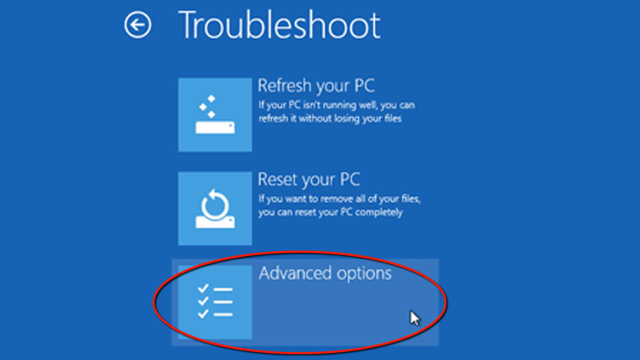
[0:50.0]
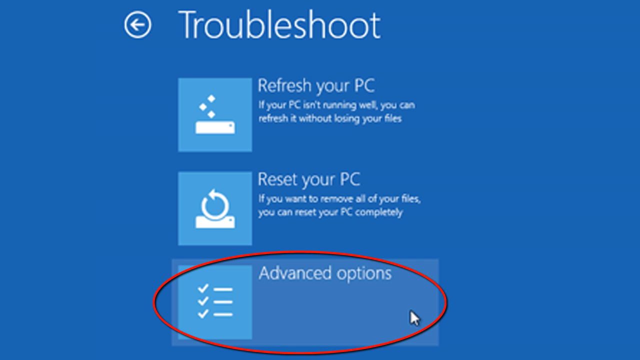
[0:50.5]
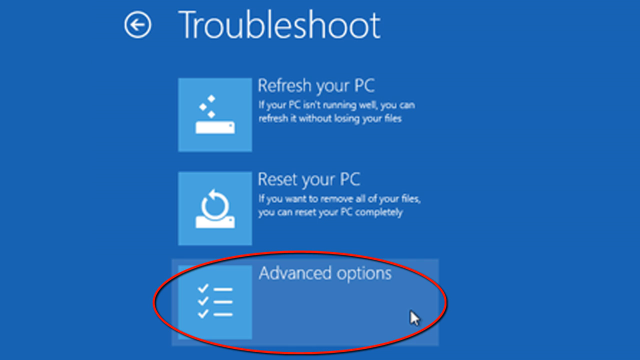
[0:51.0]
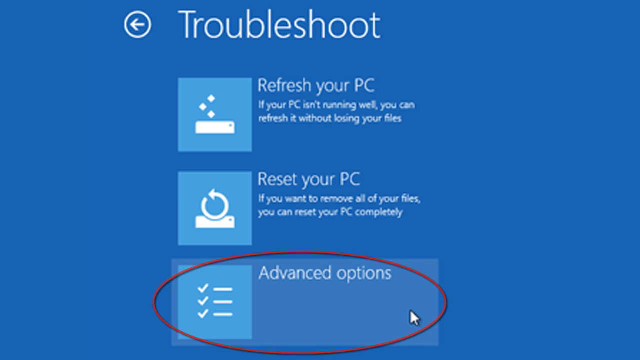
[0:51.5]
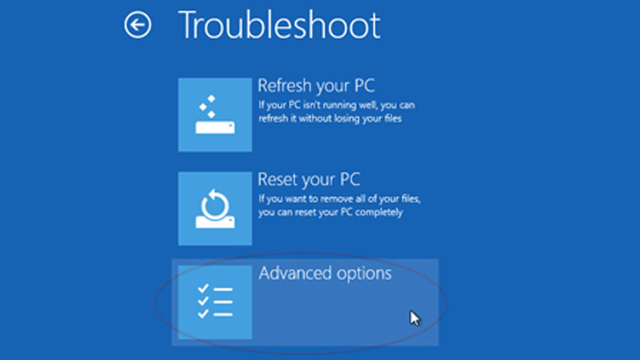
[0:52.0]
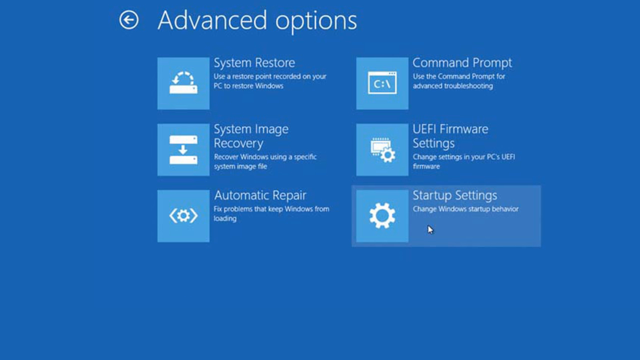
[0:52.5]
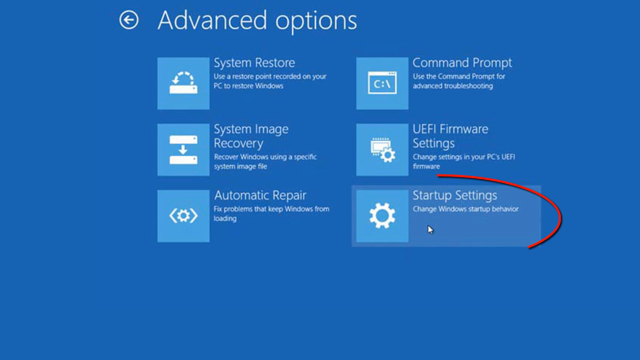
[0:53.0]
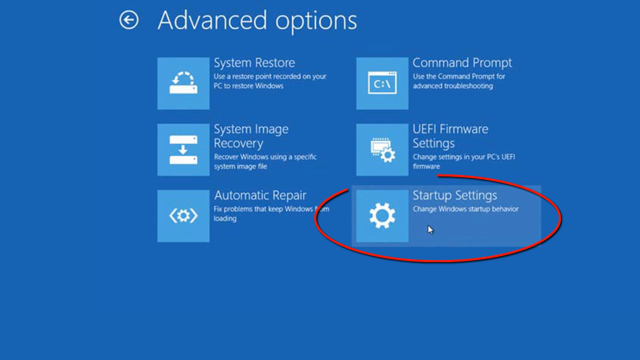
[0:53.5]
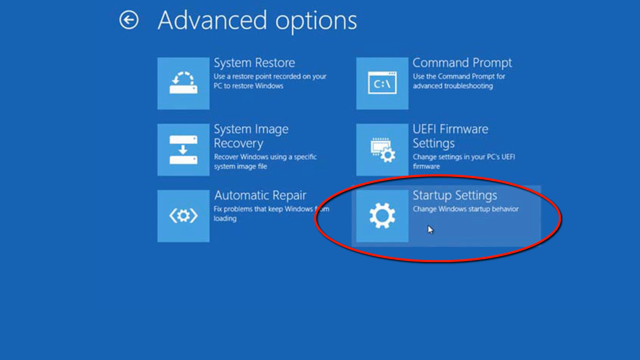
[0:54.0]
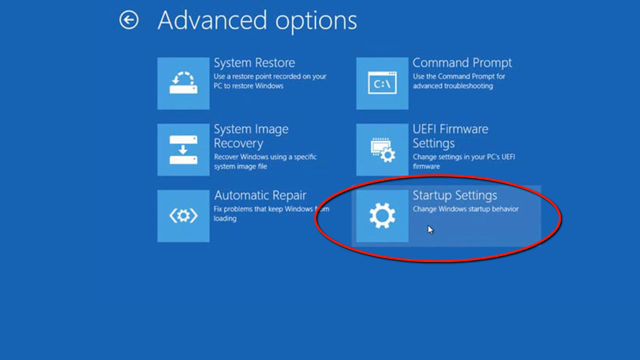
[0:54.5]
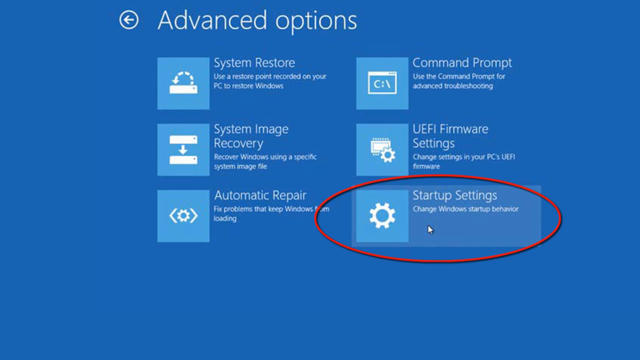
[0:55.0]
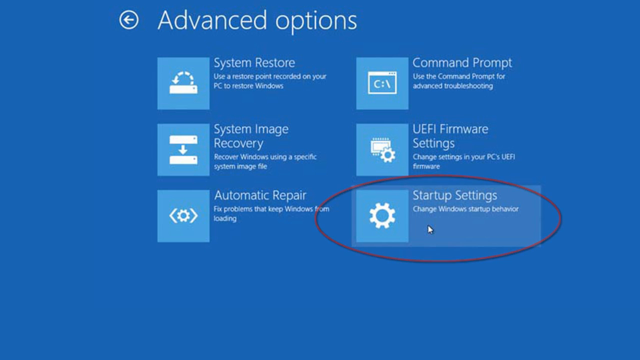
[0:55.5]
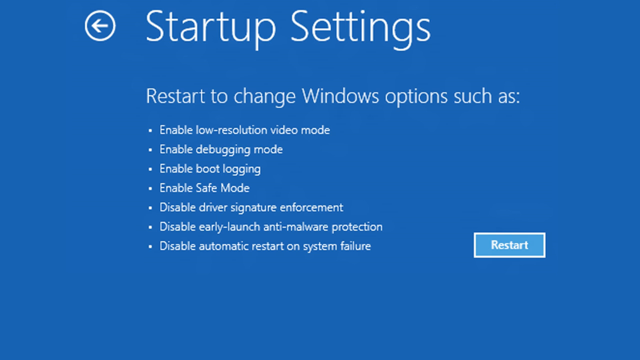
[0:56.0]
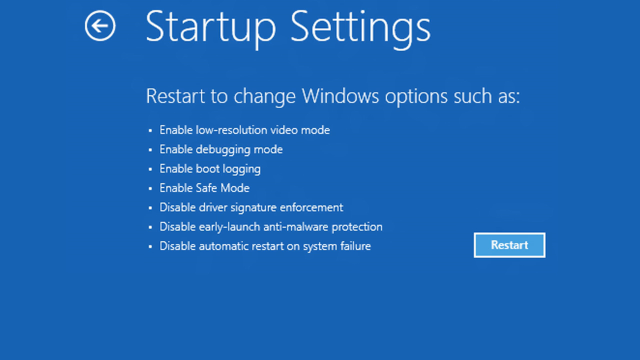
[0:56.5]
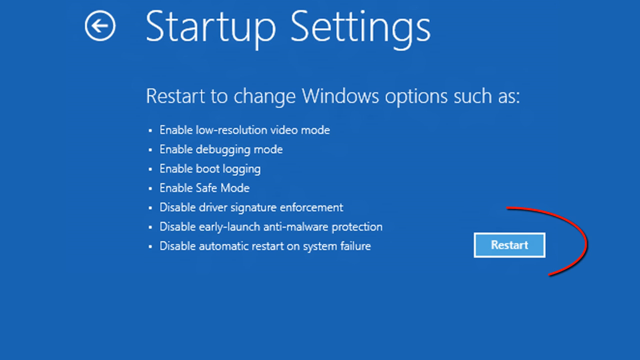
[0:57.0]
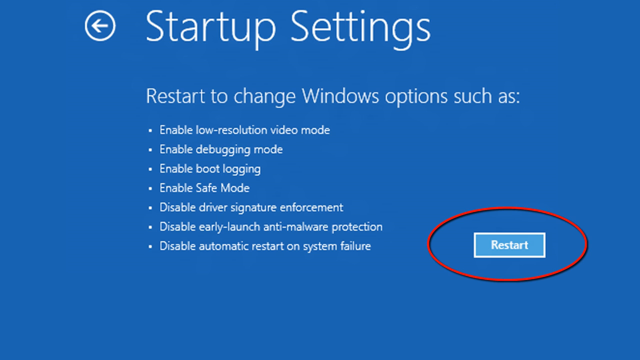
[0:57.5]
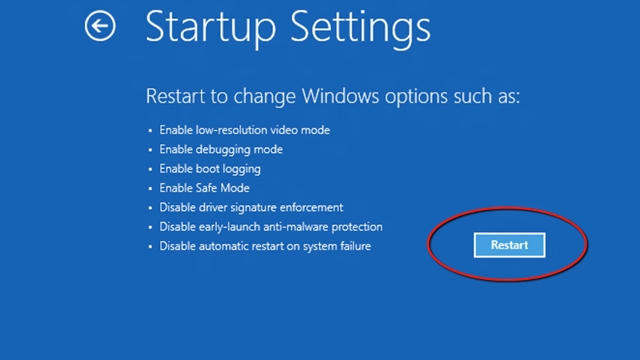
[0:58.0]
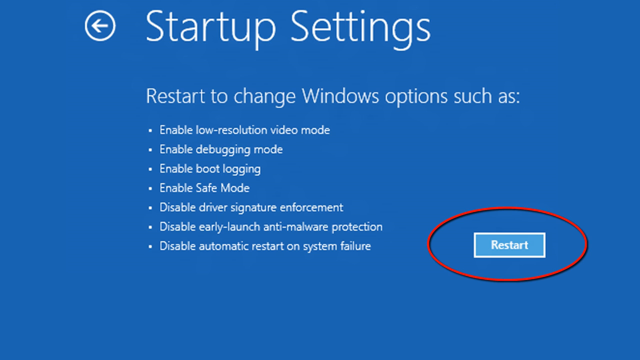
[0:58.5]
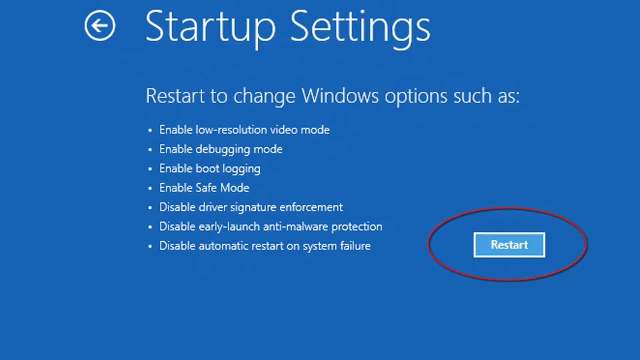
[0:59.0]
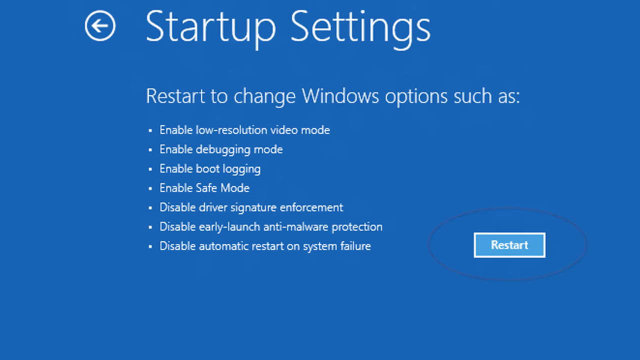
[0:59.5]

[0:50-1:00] A screen shows the advanced options and the startup settings, with the restart button highlighted. The advanced options are ringed, and from them the startup settings appear, giving the option to restart.